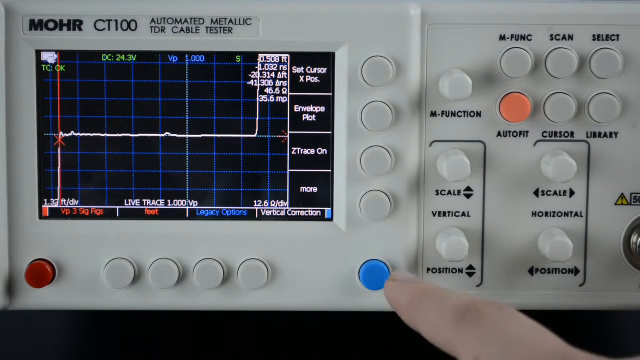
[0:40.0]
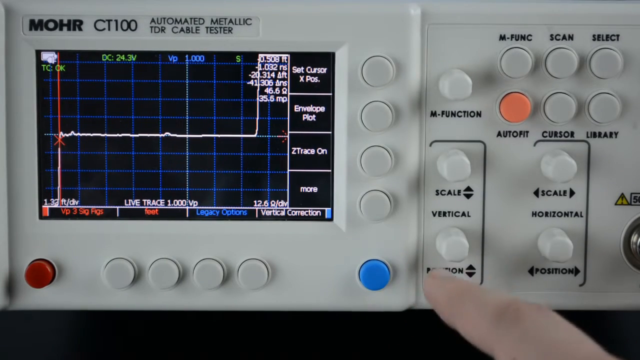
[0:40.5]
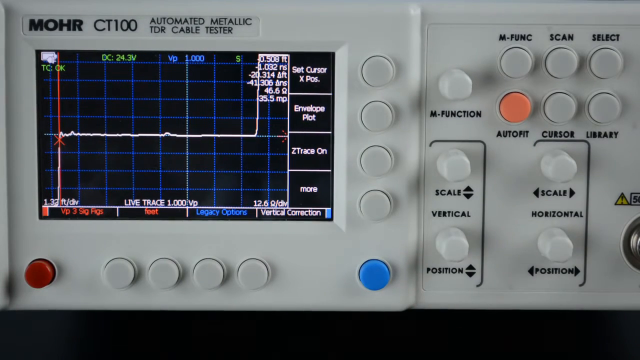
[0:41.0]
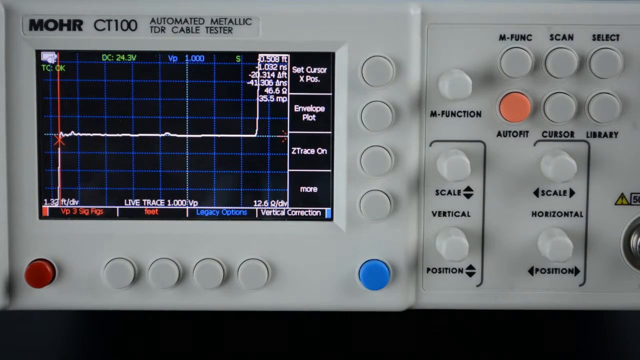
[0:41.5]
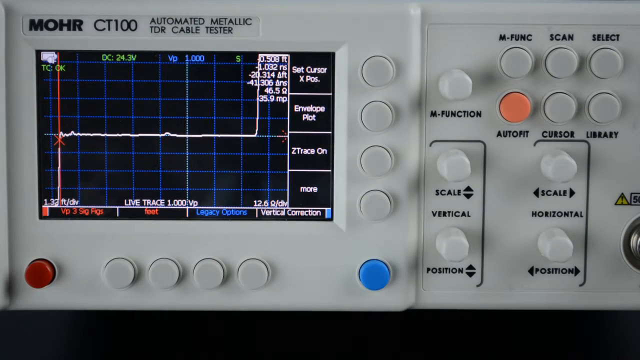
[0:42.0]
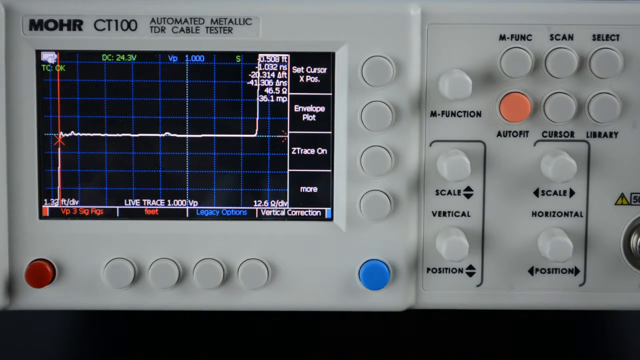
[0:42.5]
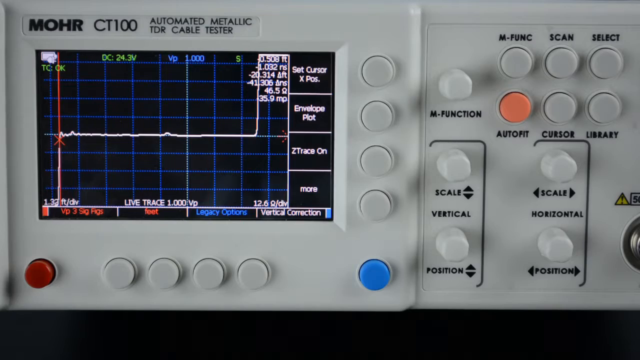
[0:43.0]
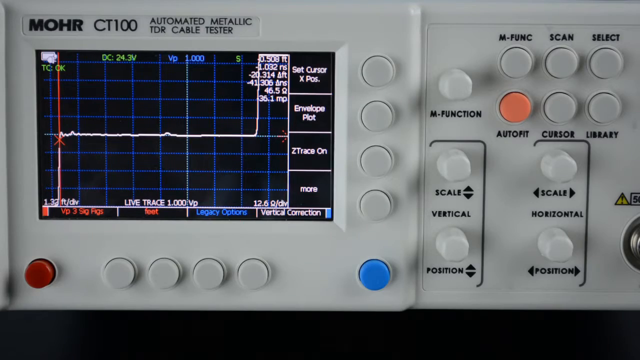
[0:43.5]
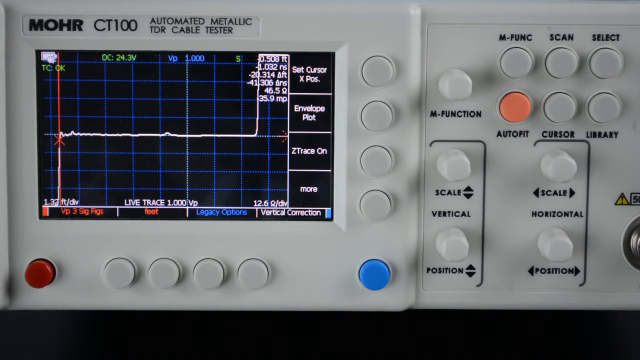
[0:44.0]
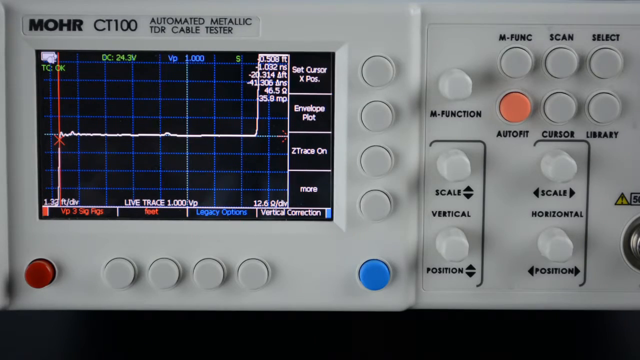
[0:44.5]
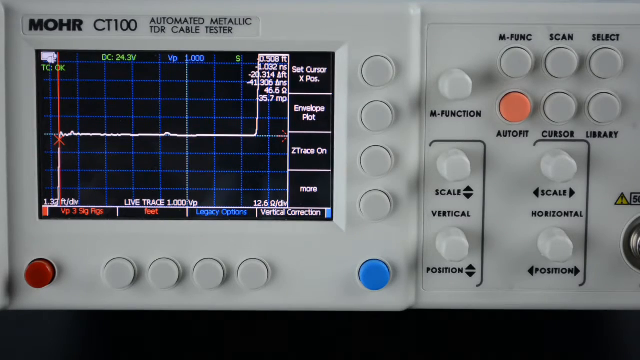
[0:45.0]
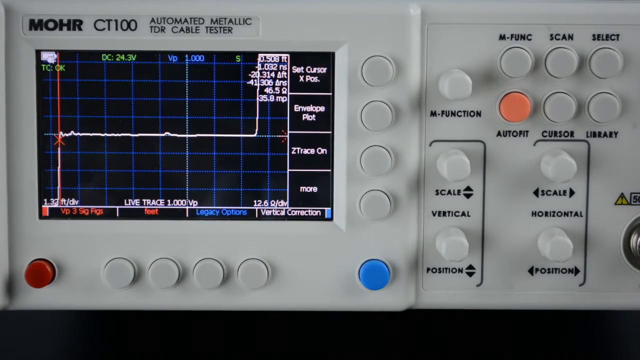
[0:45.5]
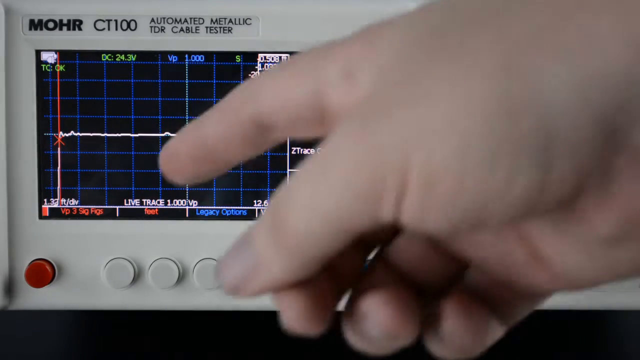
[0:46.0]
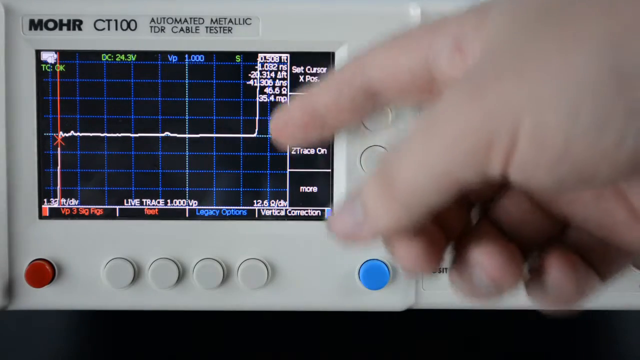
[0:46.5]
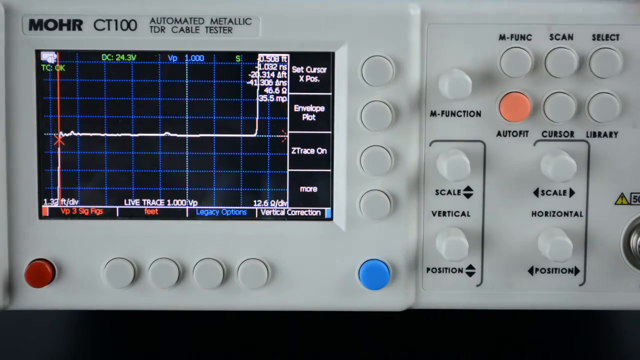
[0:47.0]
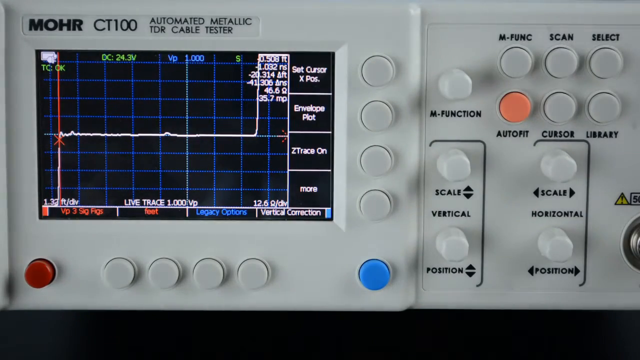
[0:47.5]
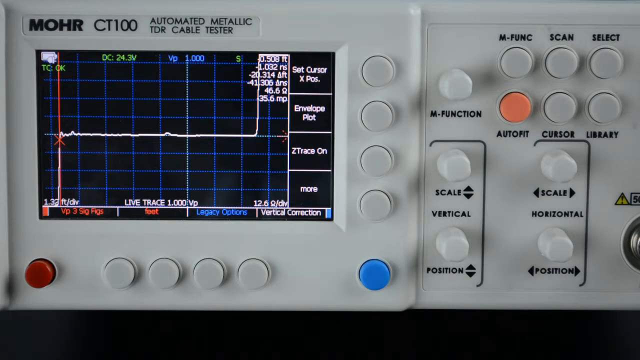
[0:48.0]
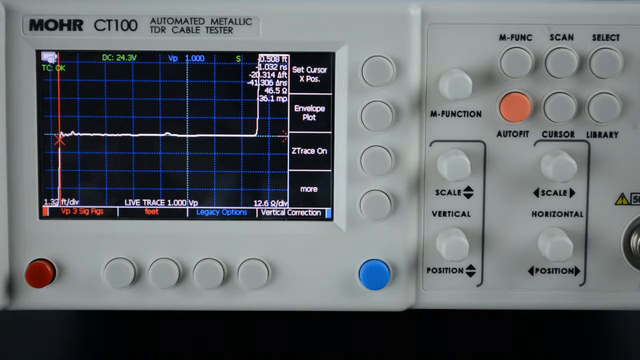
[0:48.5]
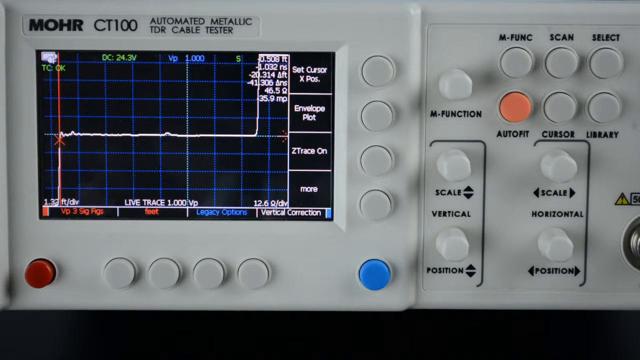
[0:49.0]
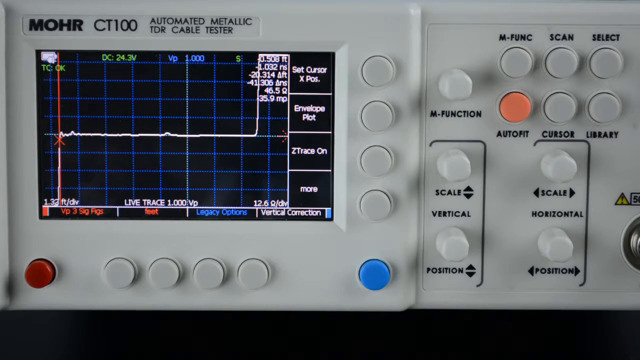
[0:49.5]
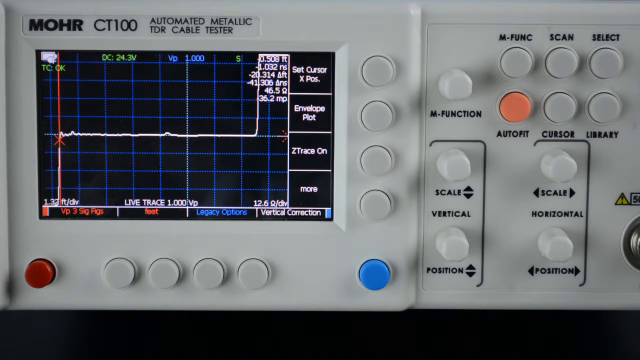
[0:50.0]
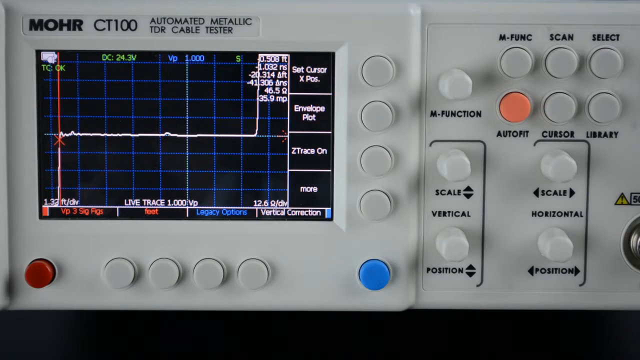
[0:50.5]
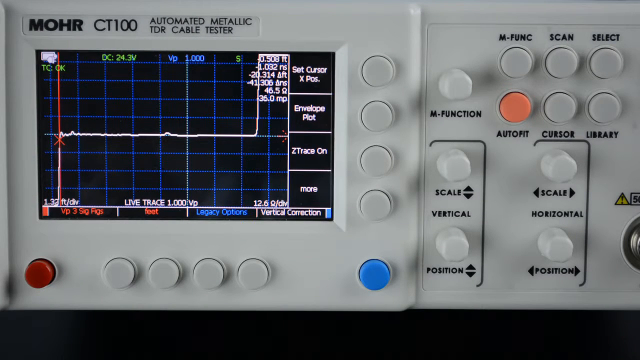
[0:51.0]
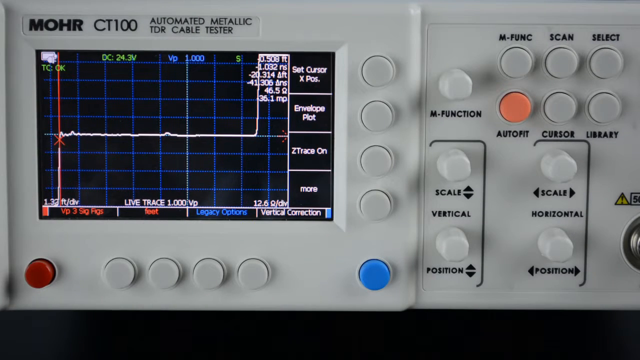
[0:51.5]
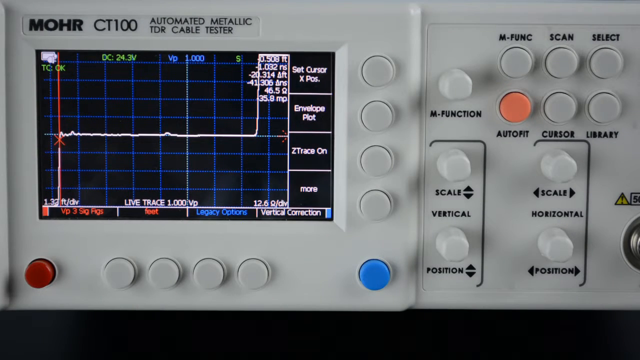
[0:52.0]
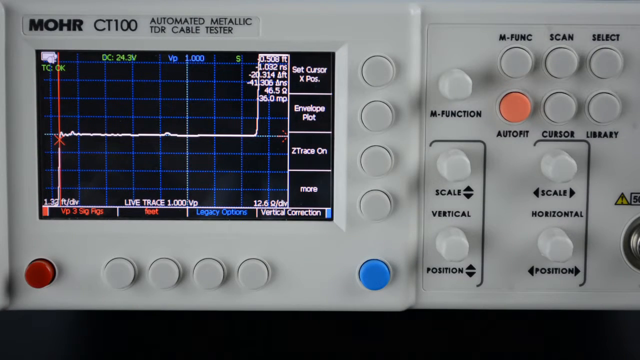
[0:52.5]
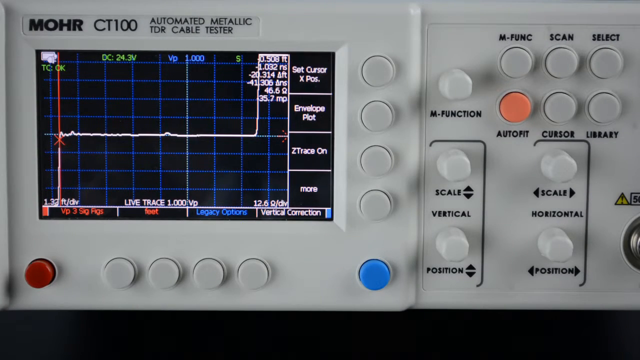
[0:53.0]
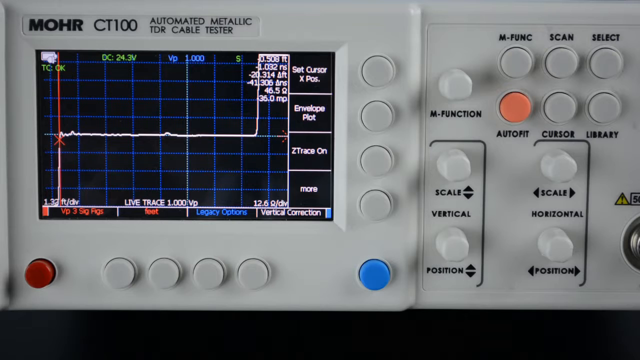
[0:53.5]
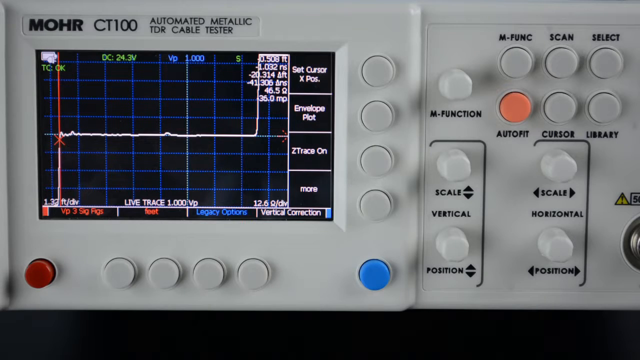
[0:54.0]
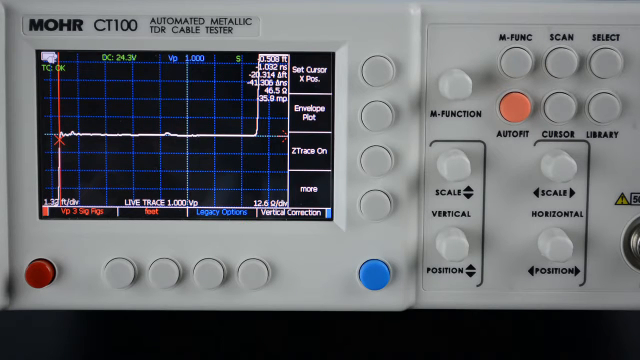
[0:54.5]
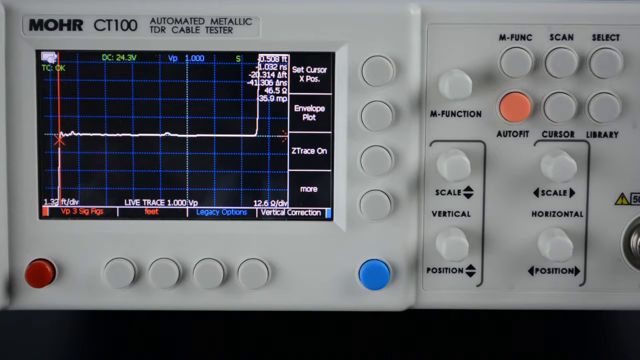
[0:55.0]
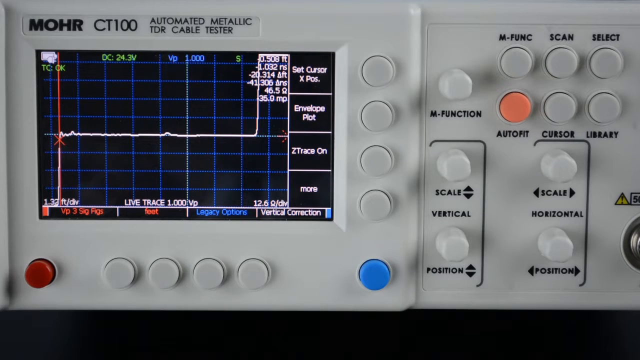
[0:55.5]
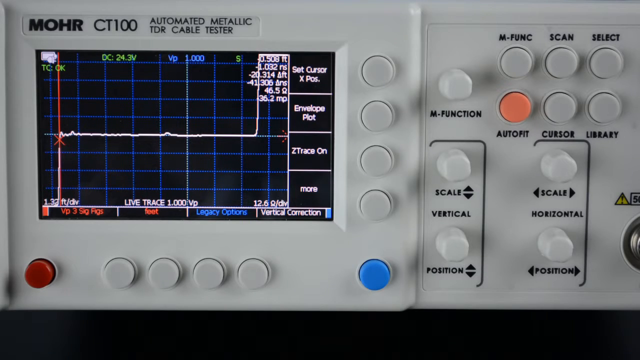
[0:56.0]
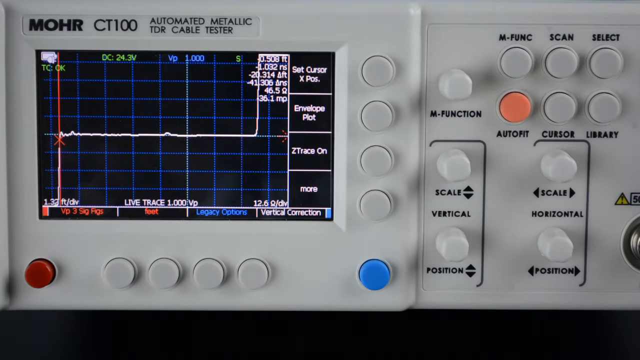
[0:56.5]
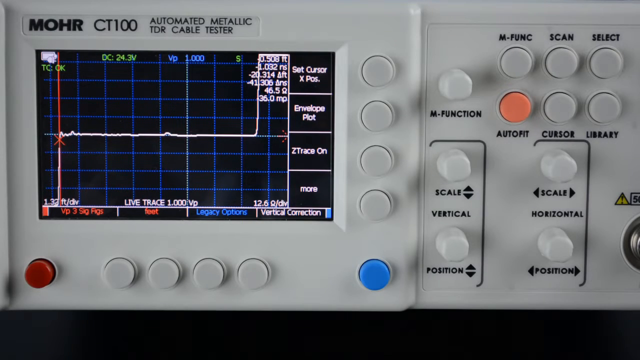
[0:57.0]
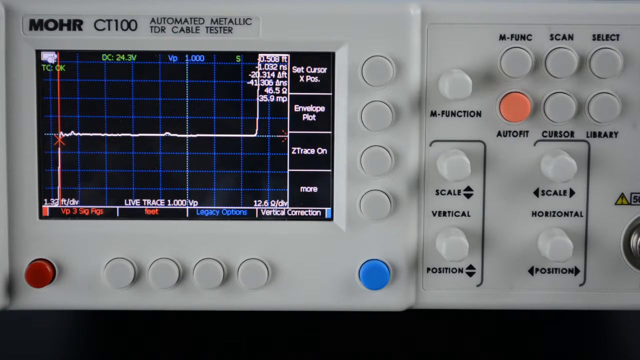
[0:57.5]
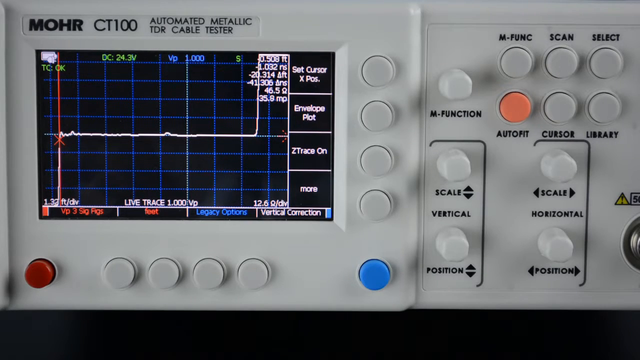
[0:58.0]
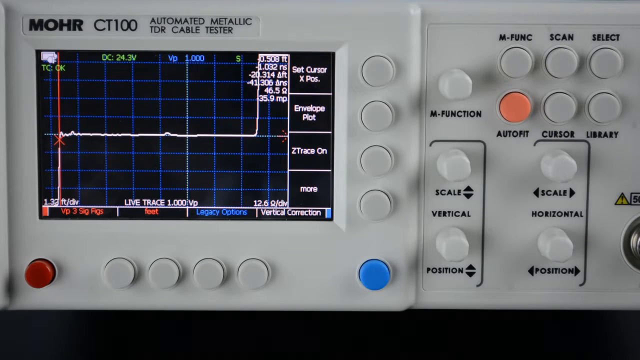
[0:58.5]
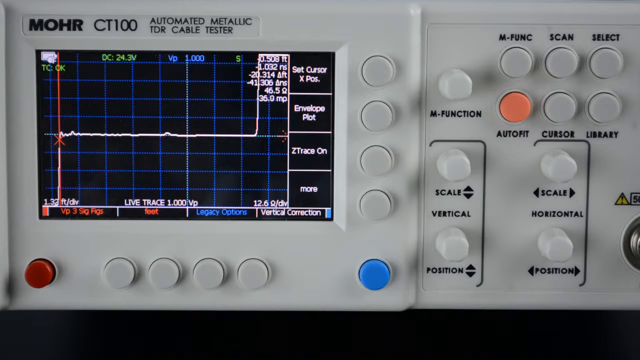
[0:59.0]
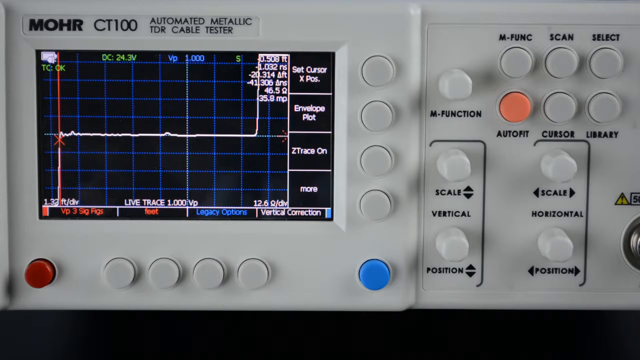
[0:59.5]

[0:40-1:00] A static view shows the device, some kind of automated cable tester. A live screen on the left side of the device is surrounded by buttons along its bottom and right side, and the right side of the device has more buttons and dials used to manipulate it. A finger hovers at the bottom centre of the screen and then disappears from view. The only motion is a number on the LCD screen that appears to go up and down between 35 MP and 36 MP. A hand then appears again from the bottom of the screen, points at the LCD screen, and disappears from view. The camera stays static, focused on the front of the device, and the only motion comes from a single moving statistic in the right-hand corner of the LCD screen.